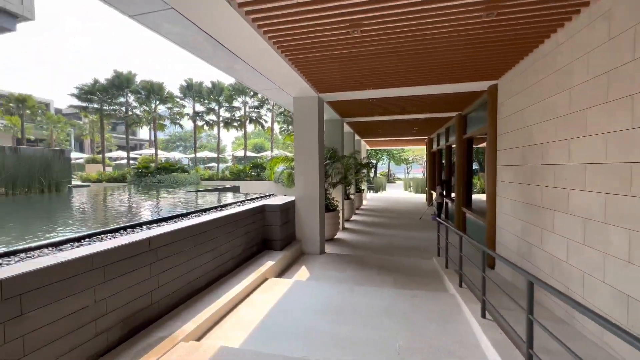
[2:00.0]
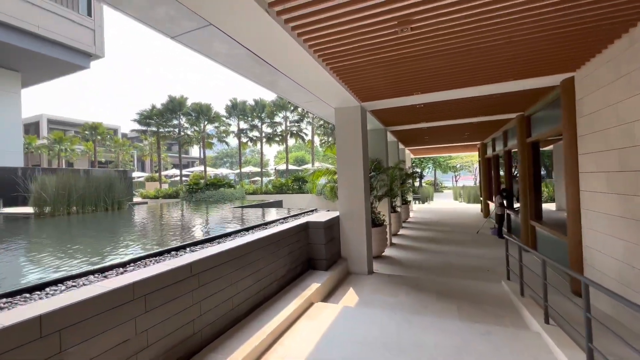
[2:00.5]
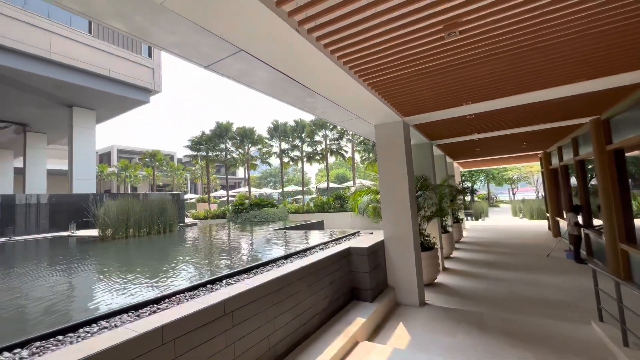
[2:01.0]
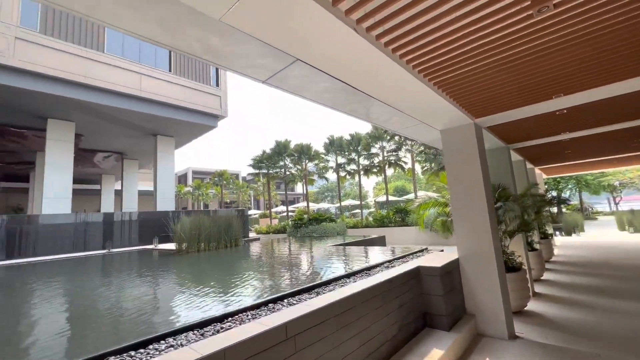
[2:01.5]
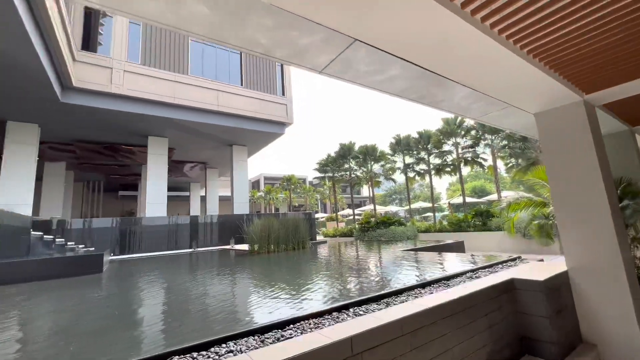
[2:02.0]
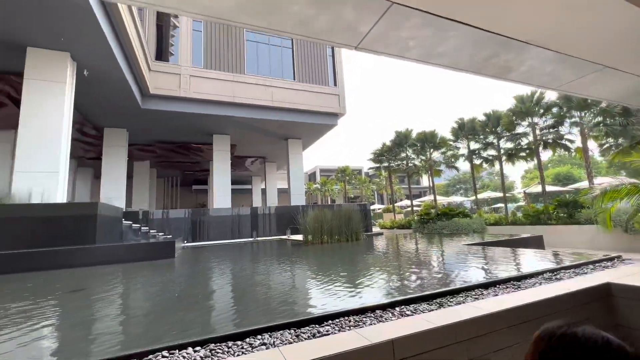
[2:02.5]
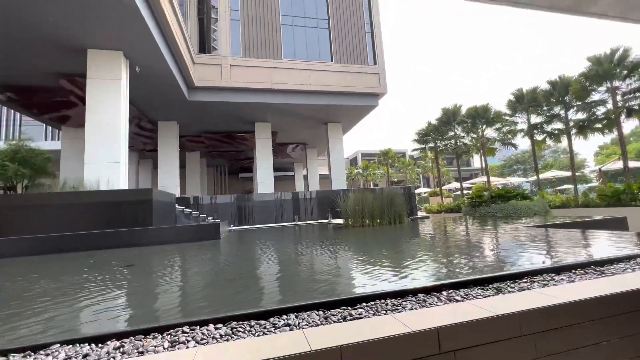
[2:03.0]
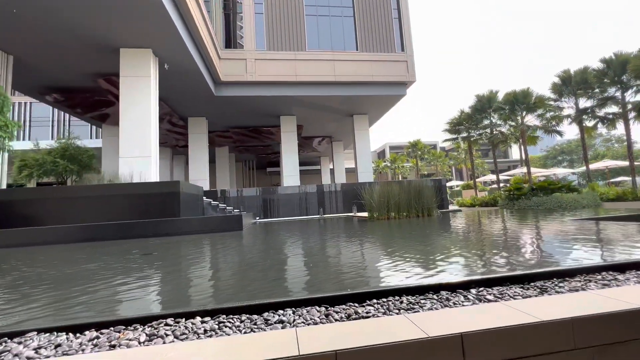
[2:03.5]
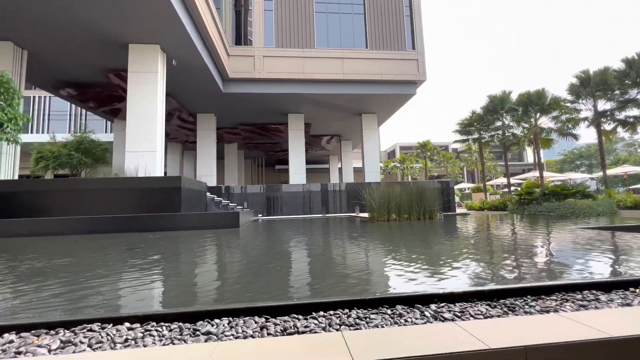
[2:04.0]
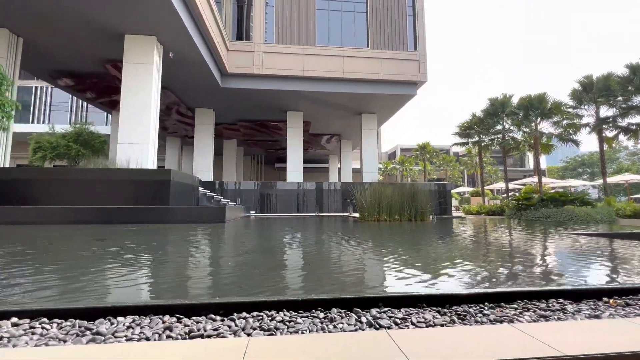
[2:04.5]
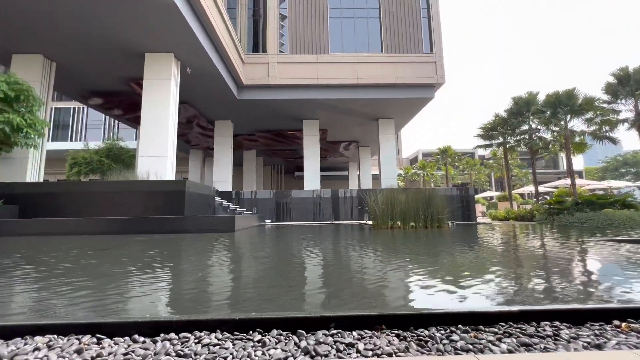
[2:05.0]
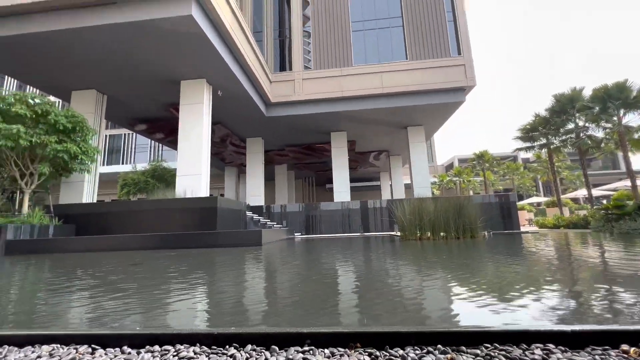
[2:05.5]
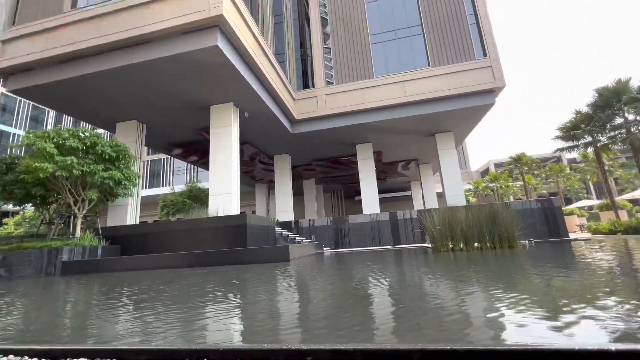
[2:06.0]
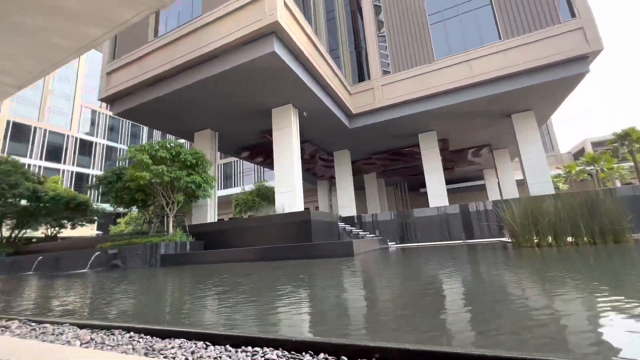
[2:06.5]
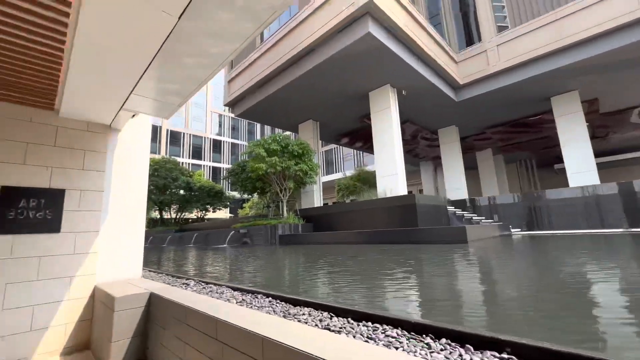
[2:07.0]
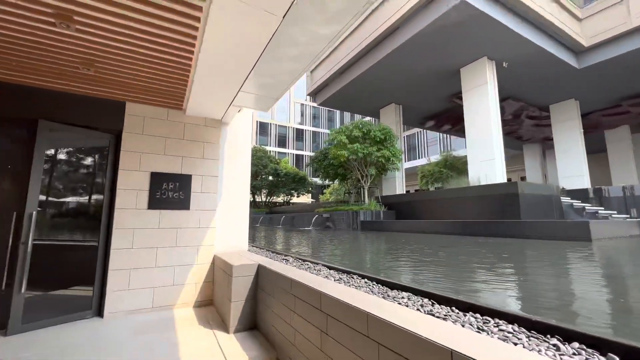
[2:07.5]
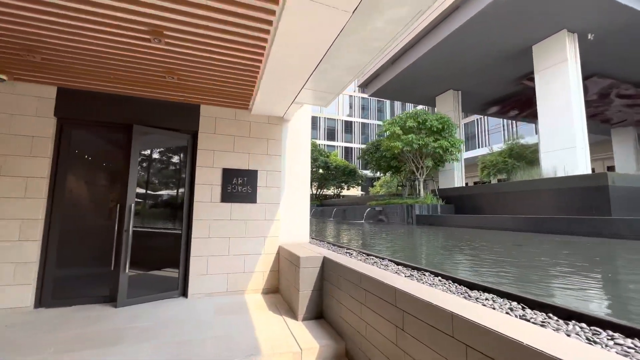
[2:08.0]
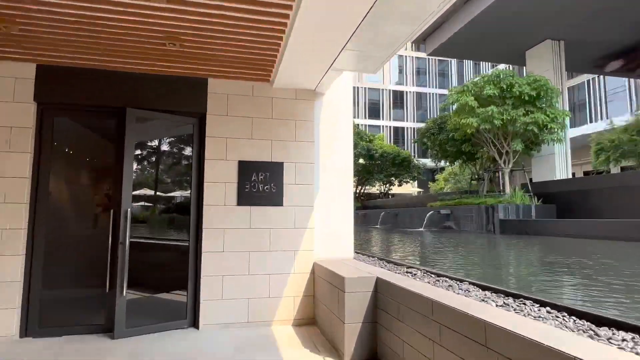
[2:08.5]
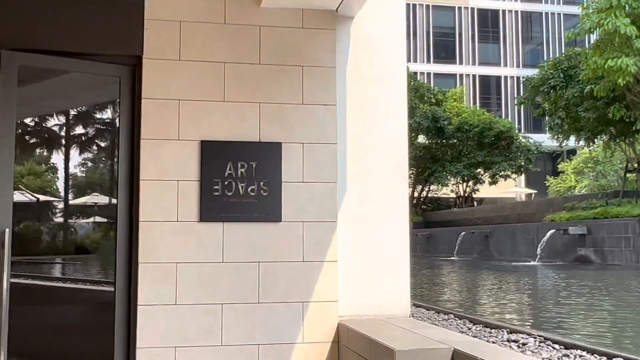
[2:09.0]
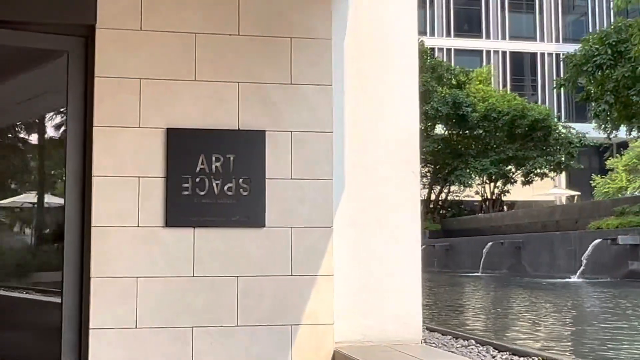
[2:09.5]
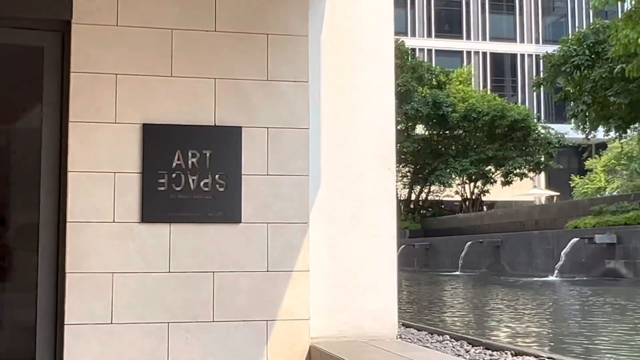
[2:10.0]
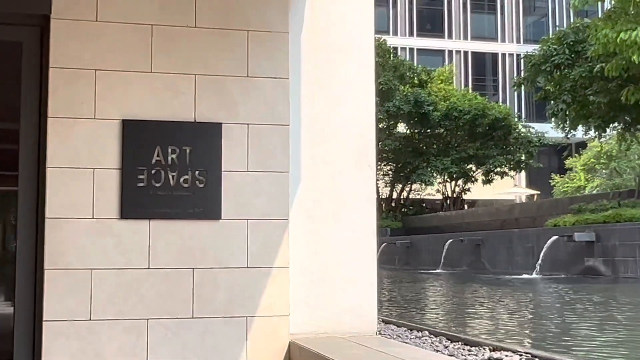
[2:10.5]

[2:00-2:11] Outside a very modern building, water flows into a pond from pipes. There is a plaque with text on the outside that says "art" followed by something unclear, and then the video cuts off. The buildings look like modern buildings in a city setting. There are palm trees. The building is a few stories tall, and the bottom is made of cinder block. Big potted tree plants are visible along the walkway when the door opens. It is a very gray day, without much sun.